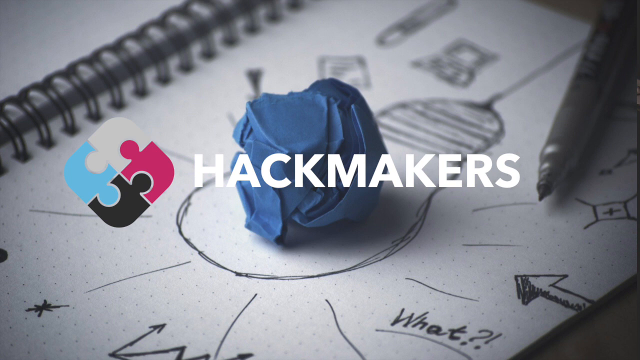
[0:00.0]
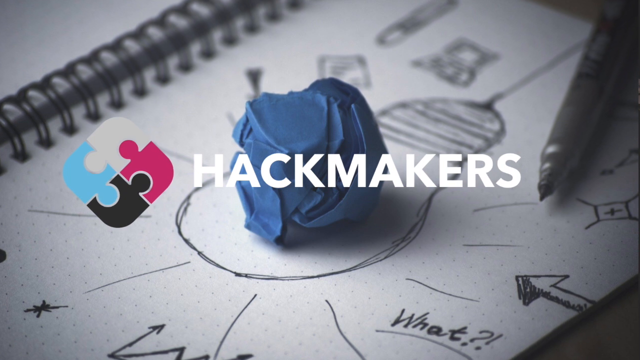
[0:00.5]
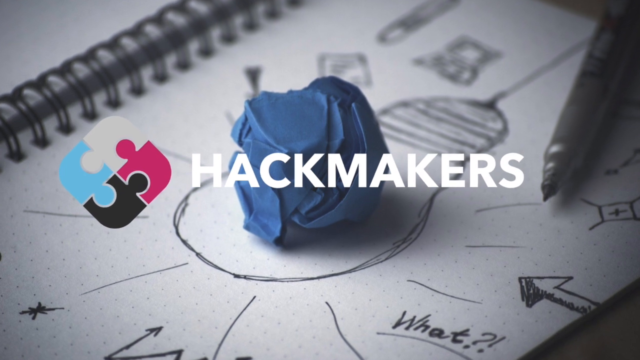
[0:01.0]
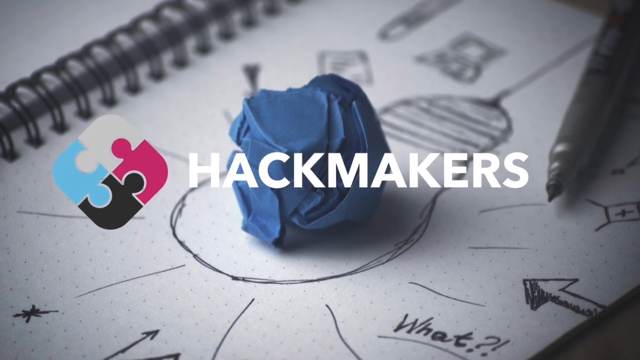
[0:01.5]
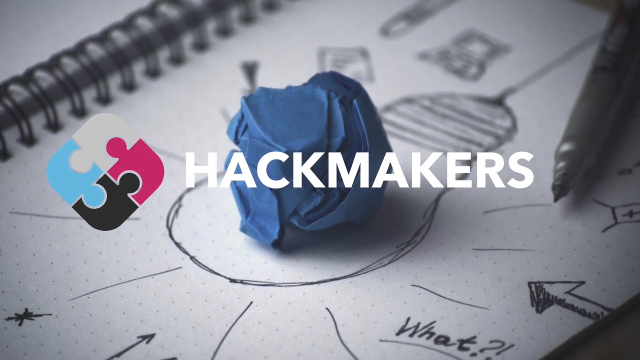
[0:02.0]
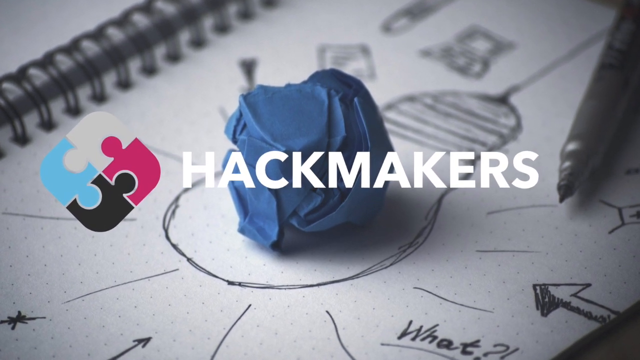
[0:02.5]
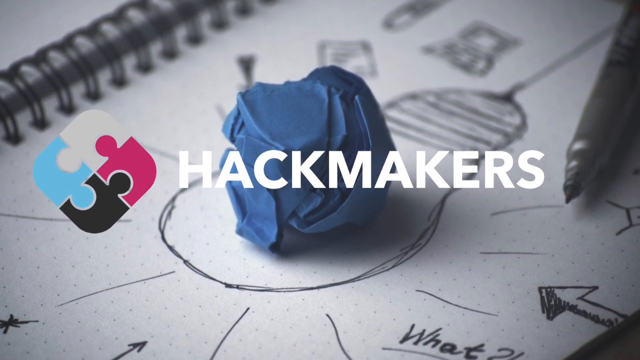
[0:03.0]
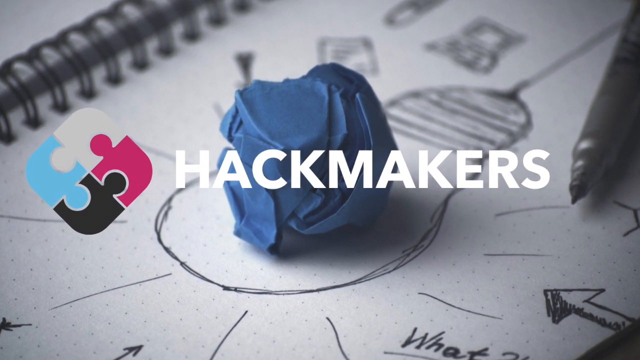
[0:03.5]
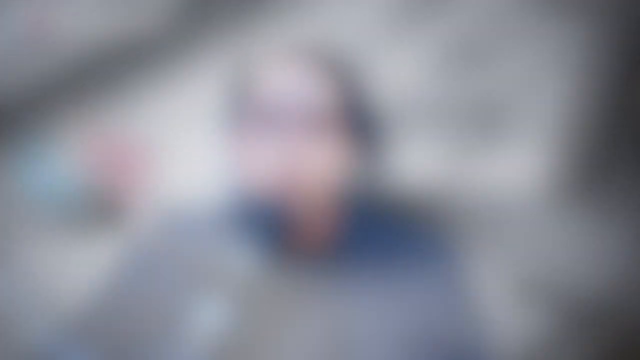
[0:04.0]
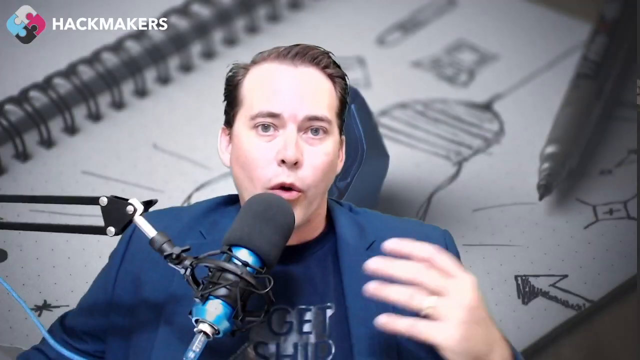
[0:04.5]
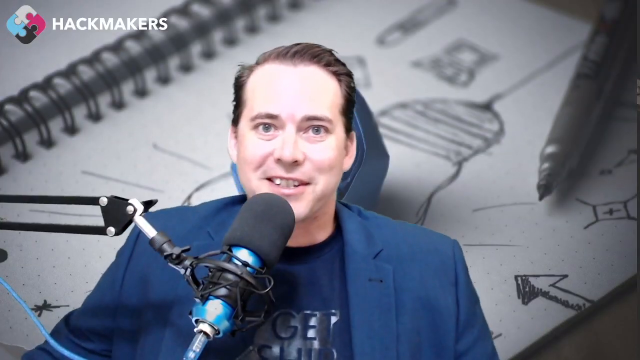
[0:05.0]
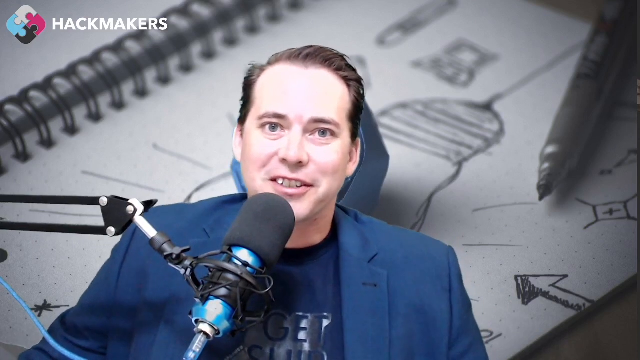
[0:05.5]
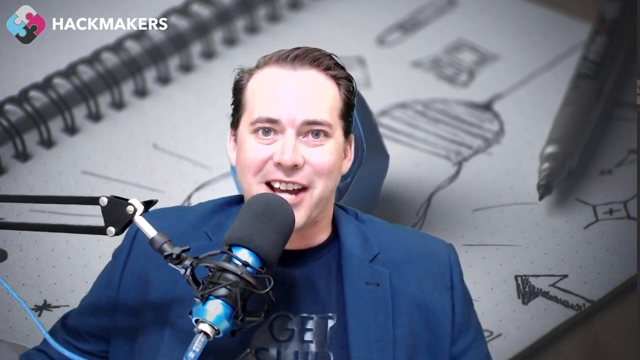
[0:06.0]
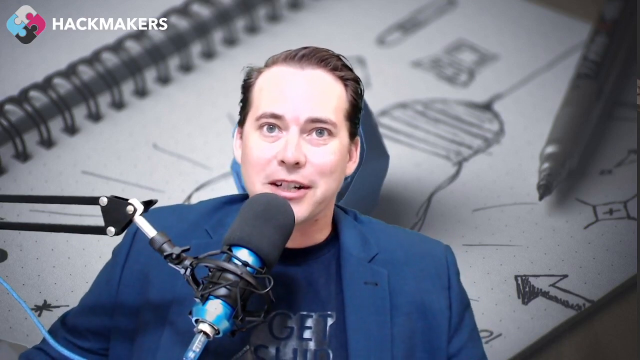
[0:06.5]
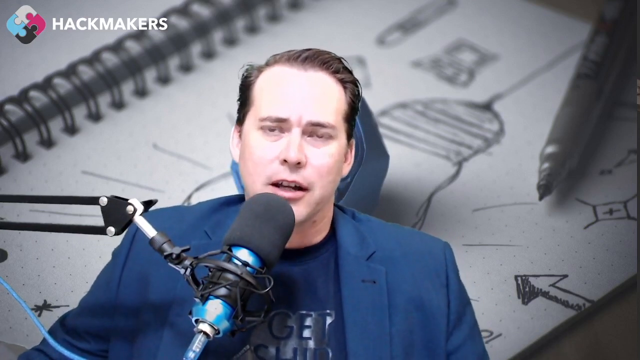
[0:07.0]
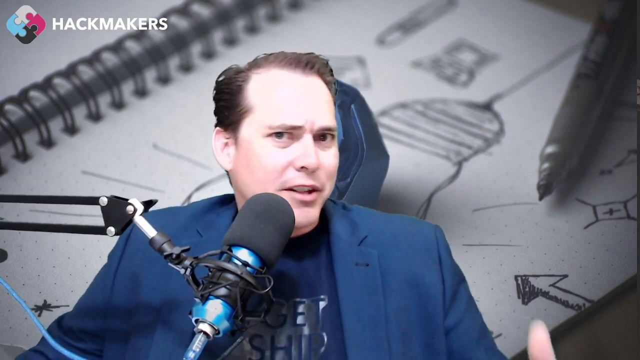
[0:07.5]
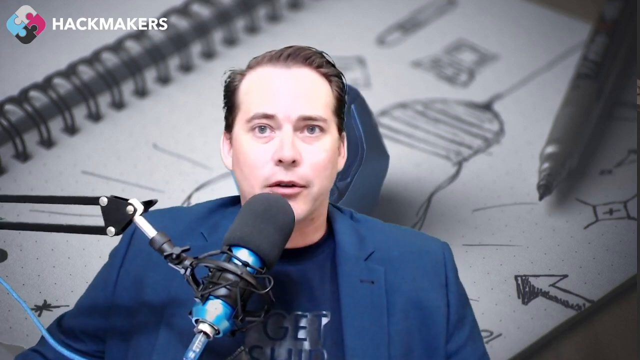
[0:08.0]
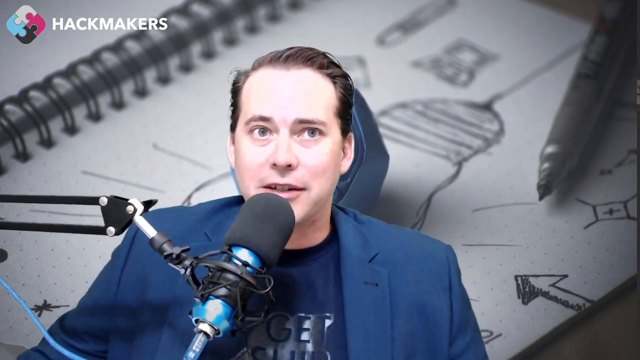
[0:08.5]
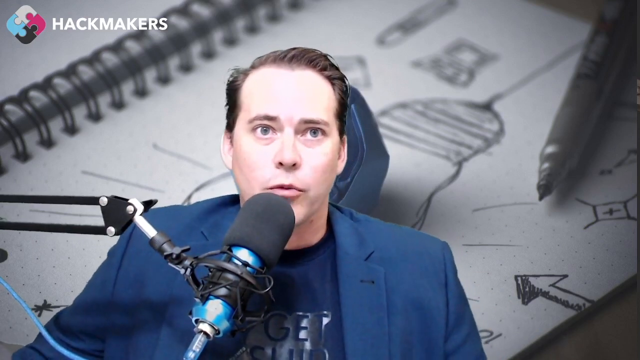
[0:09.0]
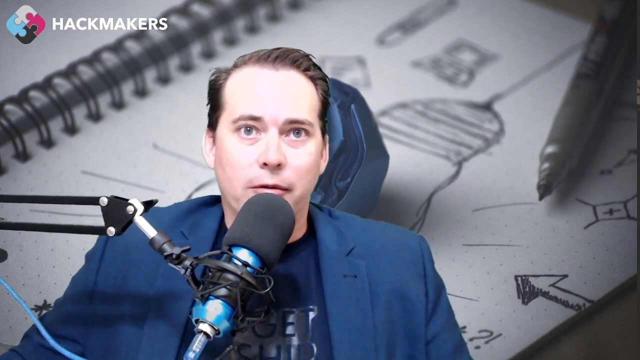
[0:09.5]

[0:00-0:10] The video opens with an introduction reading "Hackmakers." Its icon is made of four puzzle pieces, green, white, pink and black, connected together into a small rounded square. A person in a podcast appears next. Behind him is an artificial background: a huge opened piece of paper with drawings in black pencil, showing an idea light bulb, some stars and arrows, all drawn in black. A folded blue piece of paper is on top of the idea bulb.